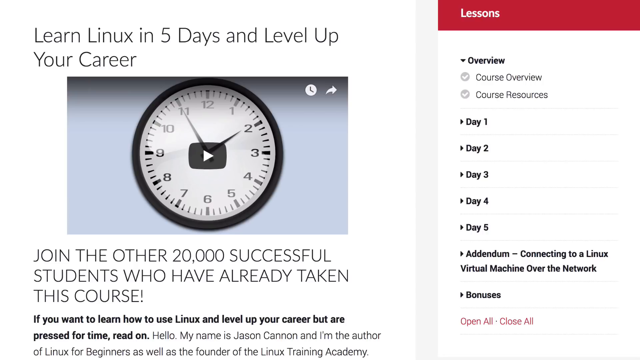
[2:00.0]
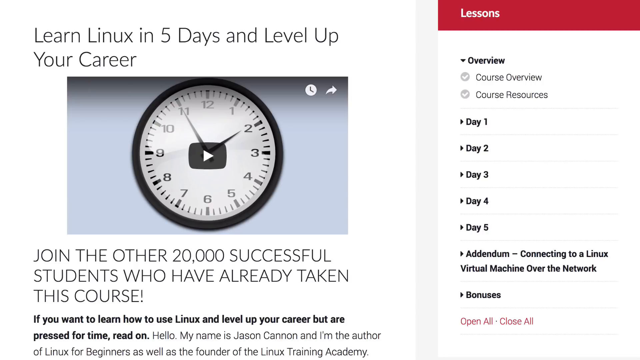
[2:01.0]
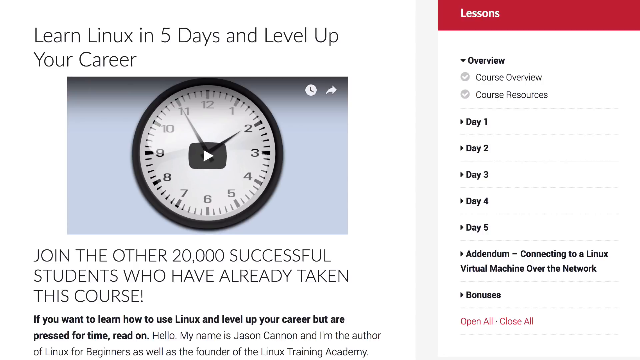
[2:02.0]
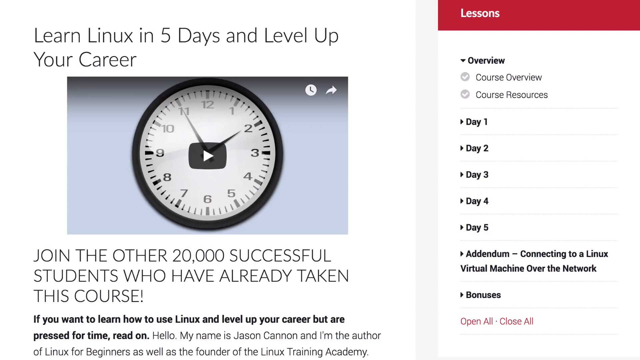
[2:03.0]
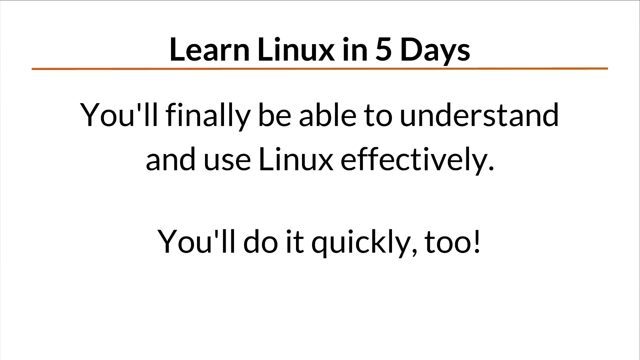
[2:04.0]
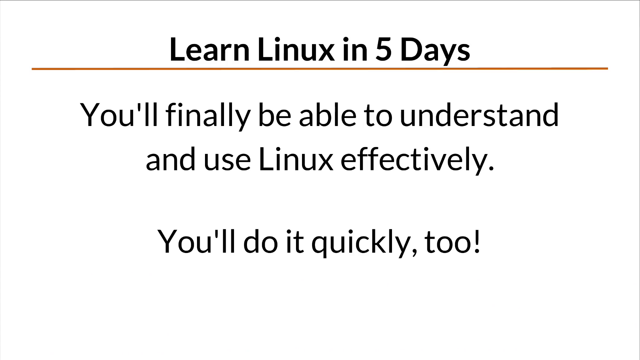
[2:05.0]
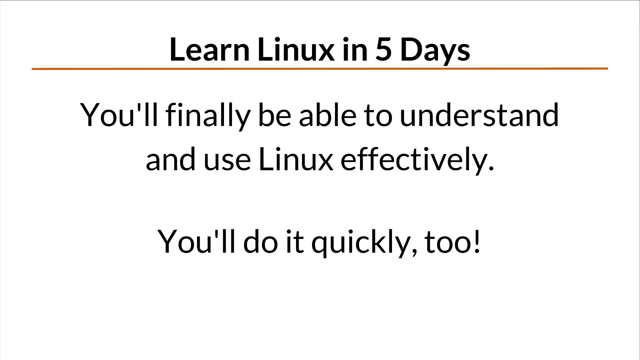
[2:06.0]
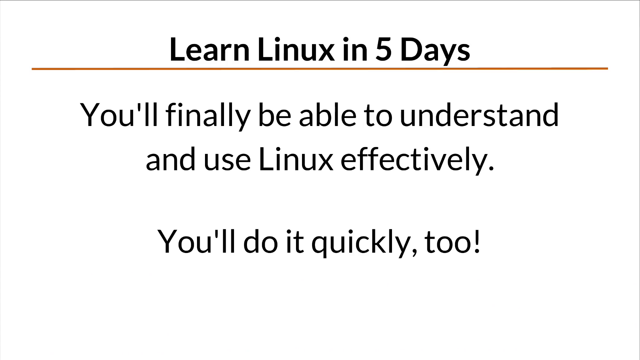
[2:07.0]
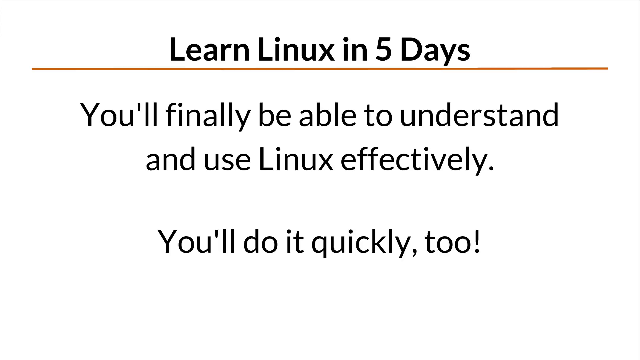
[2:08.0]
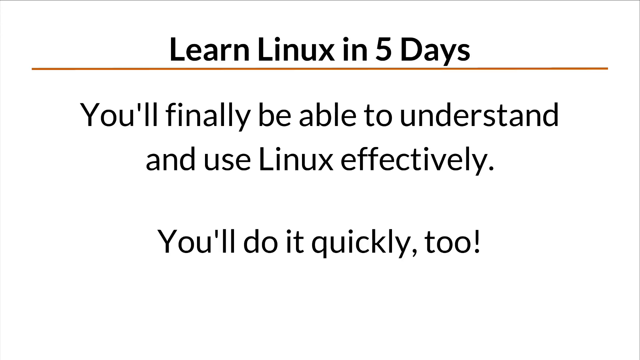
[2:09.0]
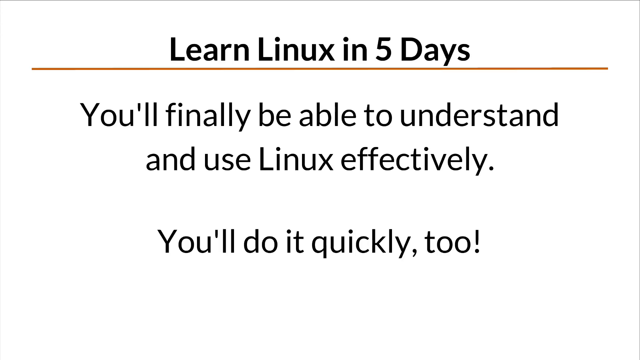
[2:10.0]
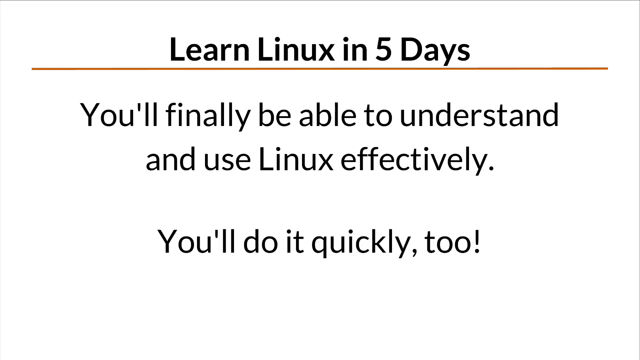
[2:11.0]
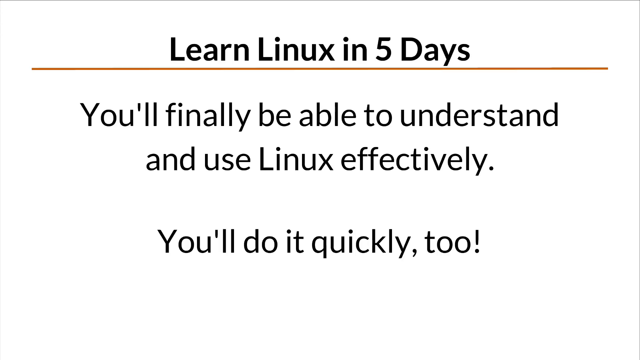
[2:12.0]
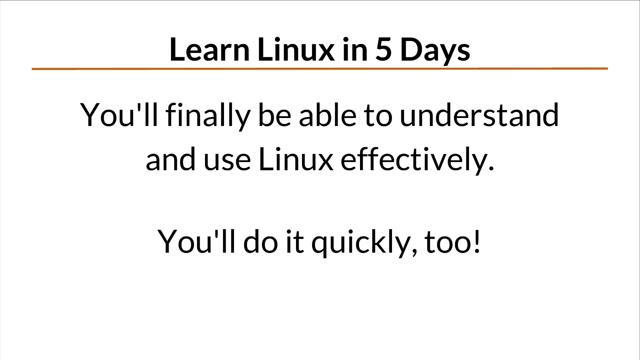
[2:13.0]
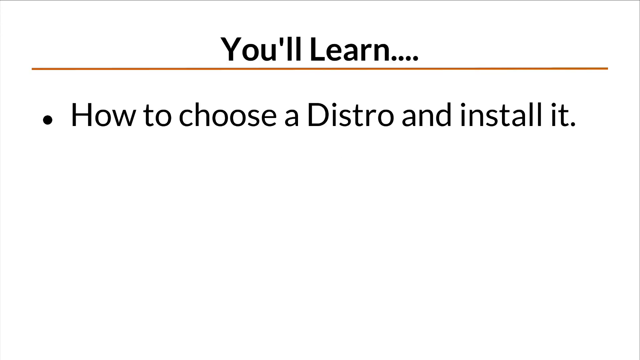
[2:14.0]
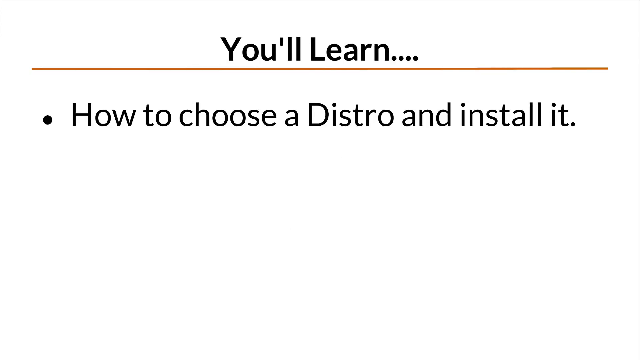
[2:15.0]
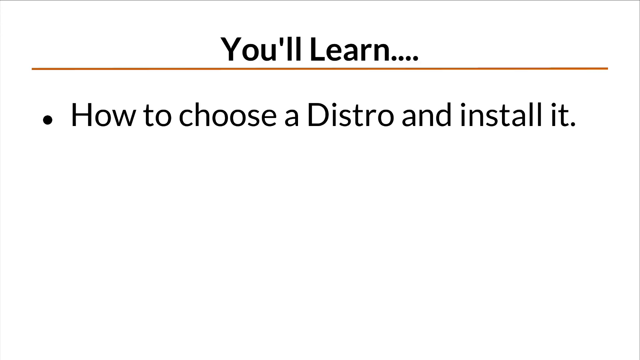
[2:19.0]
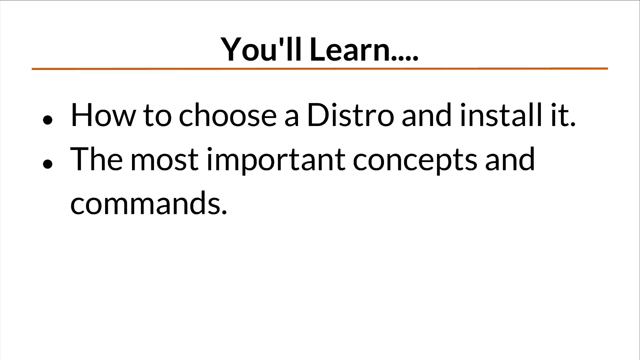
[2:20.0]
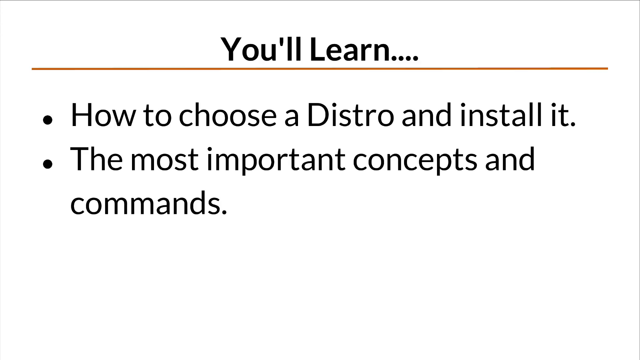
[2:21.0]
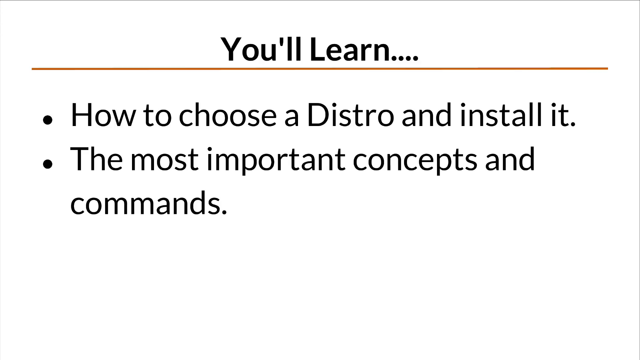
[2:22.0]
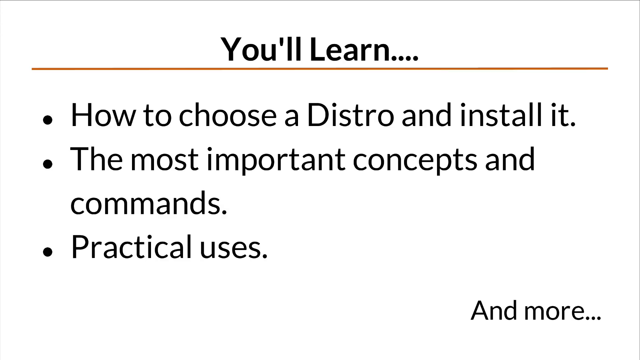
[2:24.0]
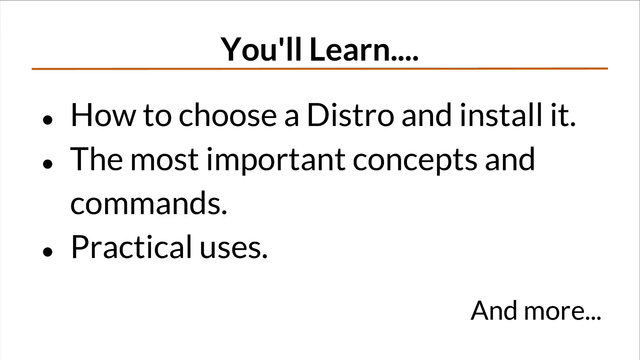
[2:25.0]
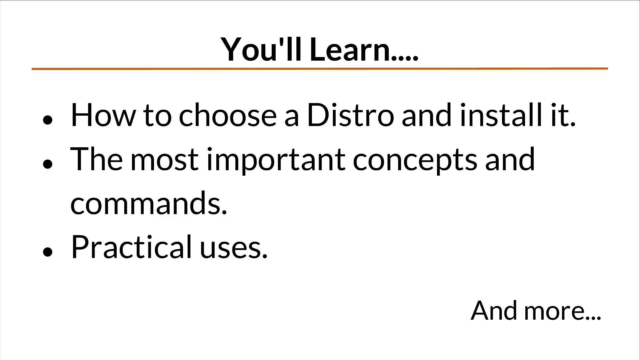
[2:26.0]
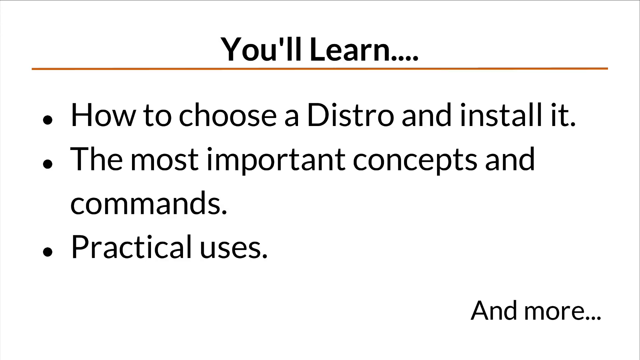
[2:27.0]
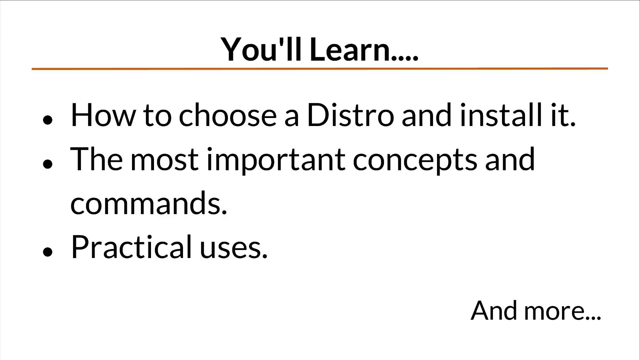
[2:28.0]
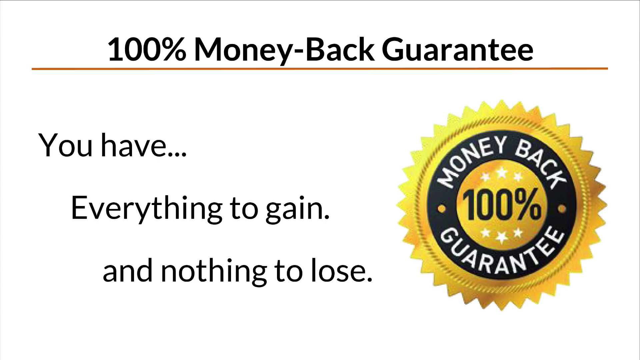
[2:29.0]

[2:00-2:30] A block on the screen shows text about LearnLinux, with a description mentioning around 20,000 students who have already taken the course. On the right-hand side it reads "license", "day 1", "day 2", "day 3", "day 4", "day 5".